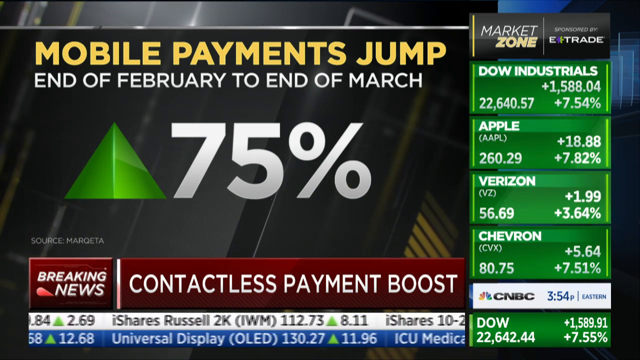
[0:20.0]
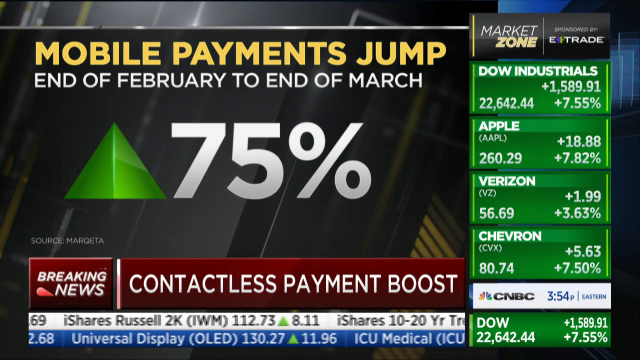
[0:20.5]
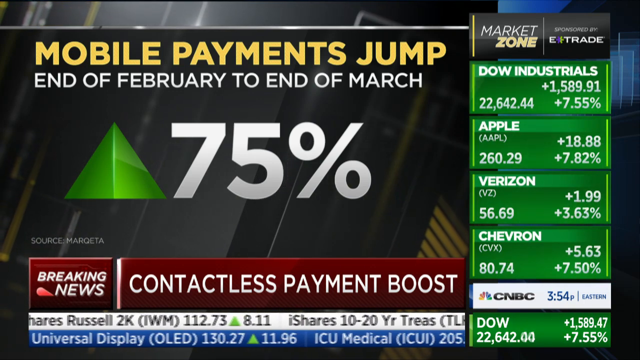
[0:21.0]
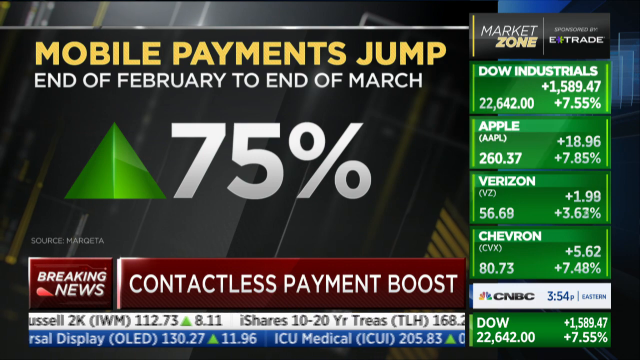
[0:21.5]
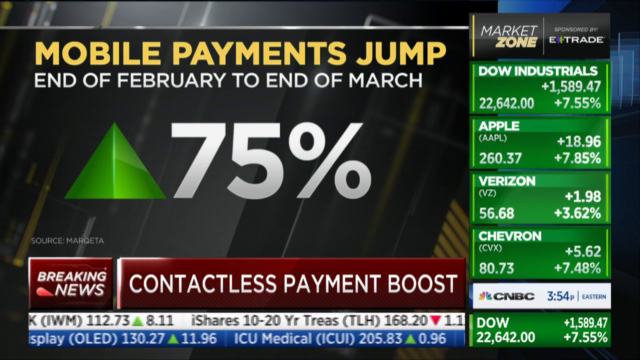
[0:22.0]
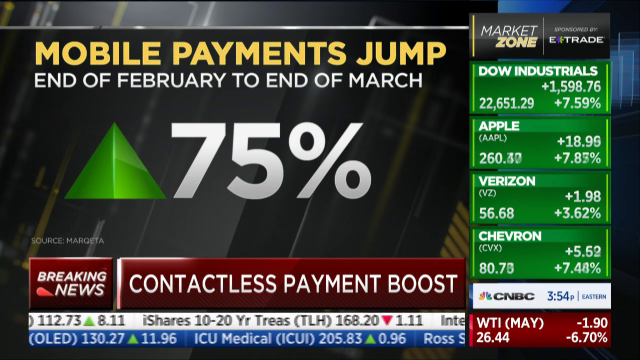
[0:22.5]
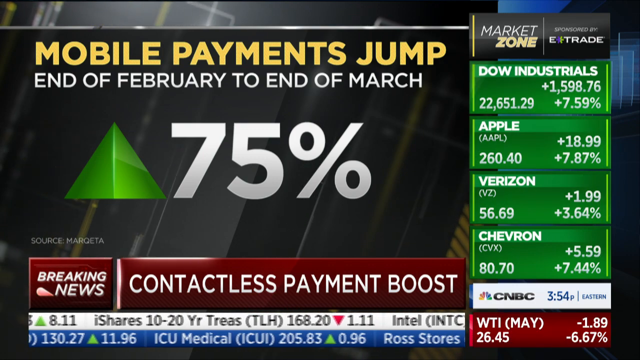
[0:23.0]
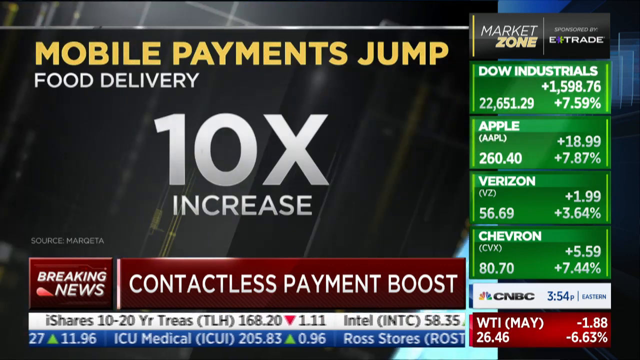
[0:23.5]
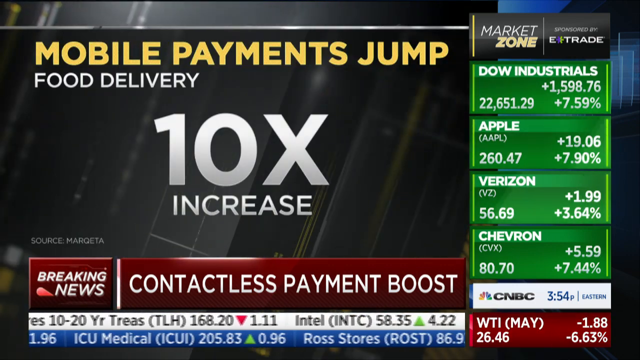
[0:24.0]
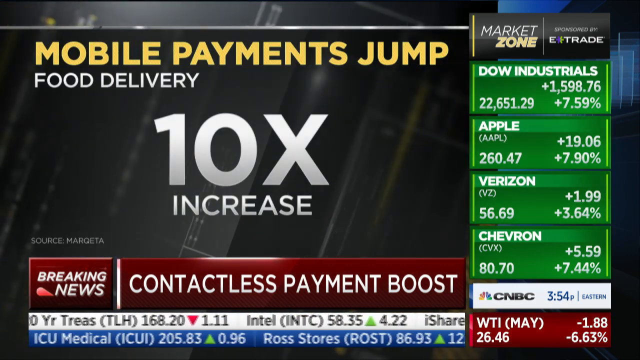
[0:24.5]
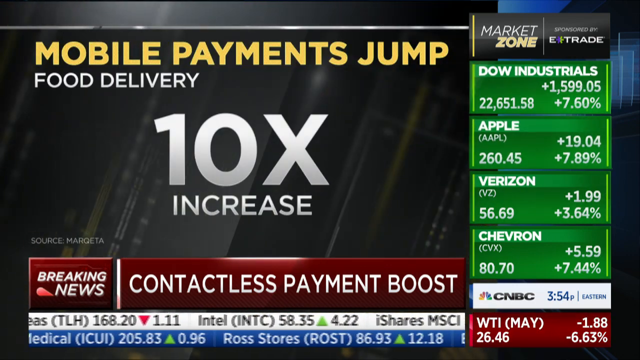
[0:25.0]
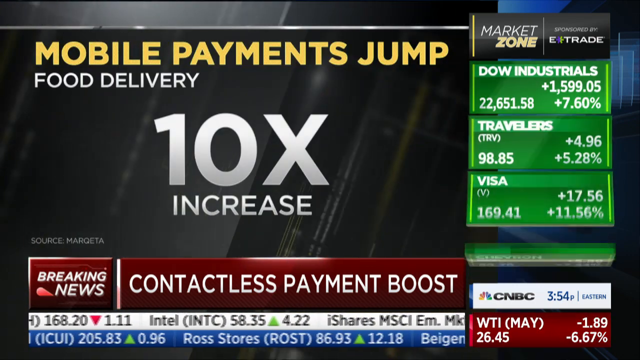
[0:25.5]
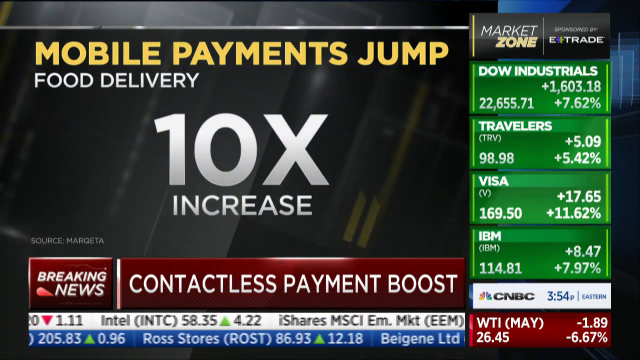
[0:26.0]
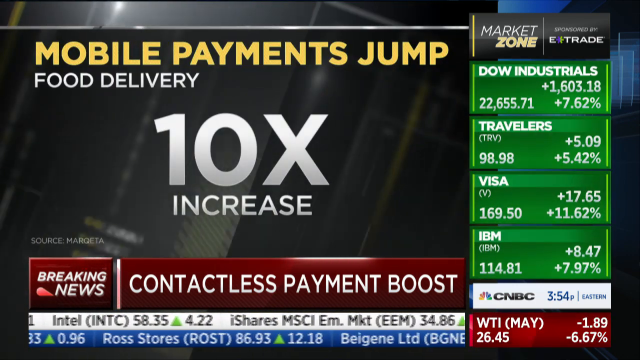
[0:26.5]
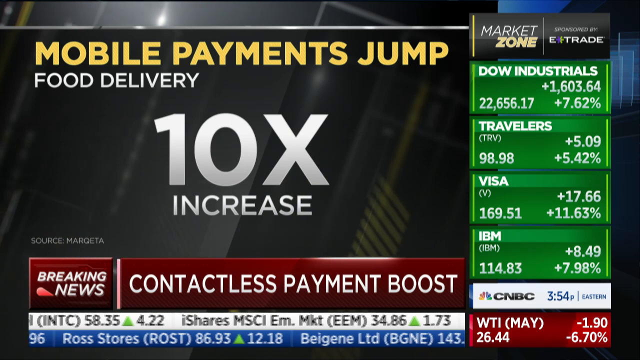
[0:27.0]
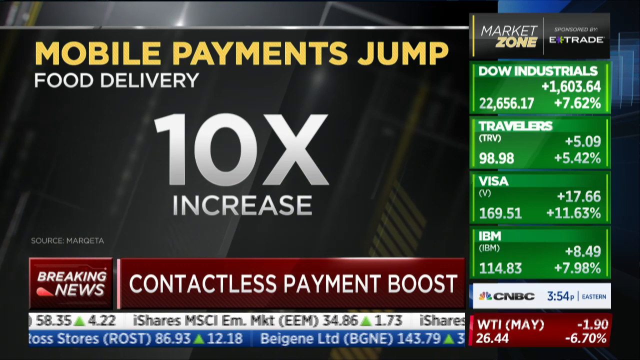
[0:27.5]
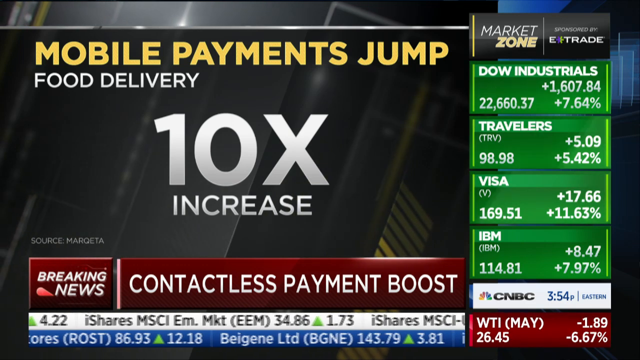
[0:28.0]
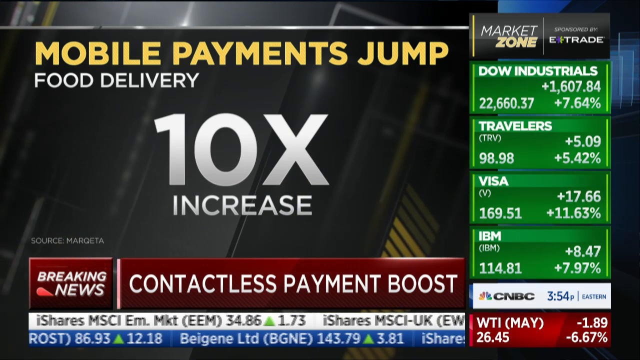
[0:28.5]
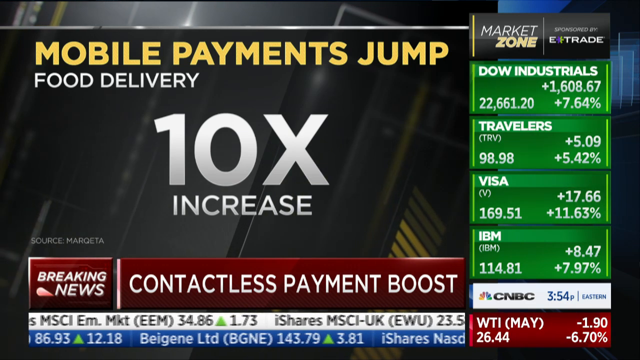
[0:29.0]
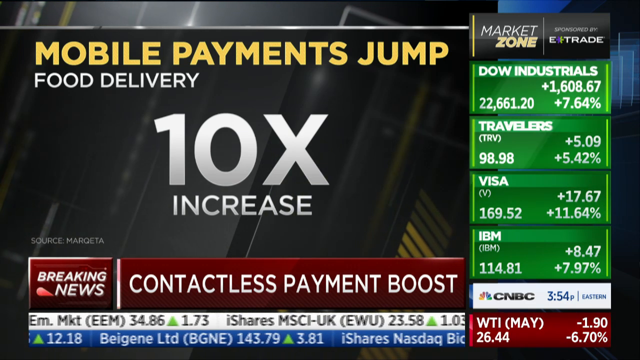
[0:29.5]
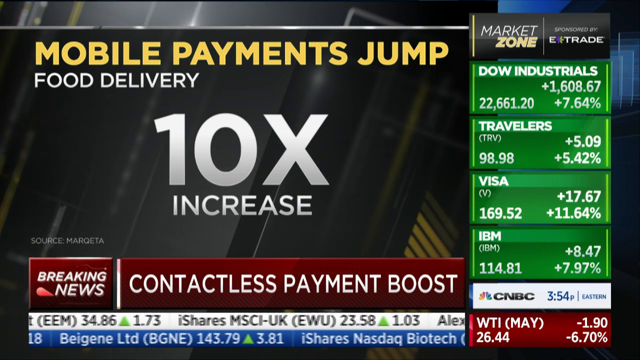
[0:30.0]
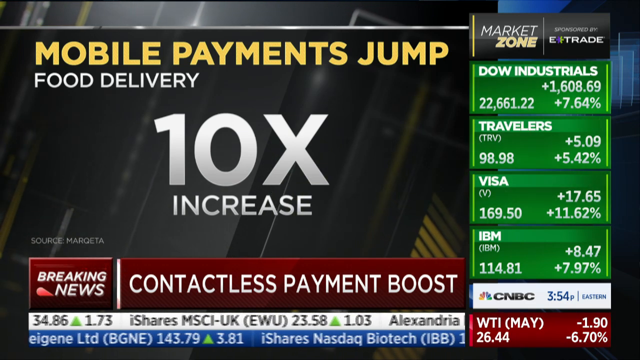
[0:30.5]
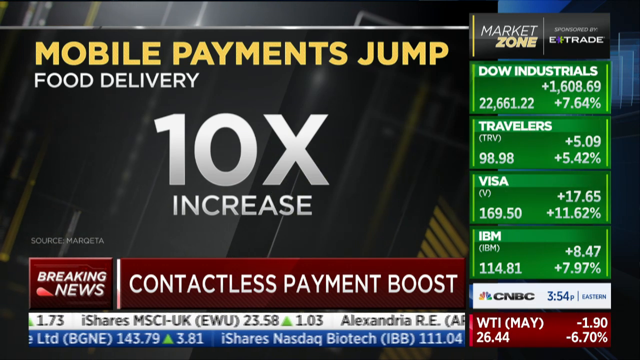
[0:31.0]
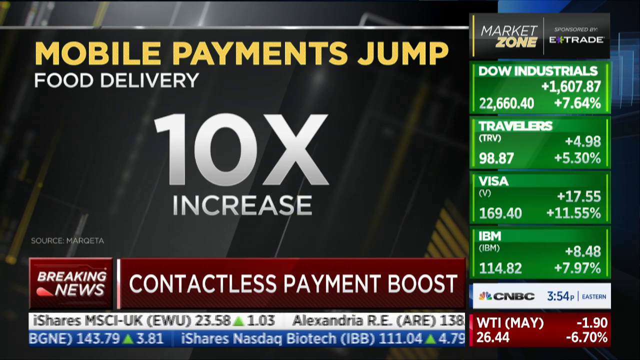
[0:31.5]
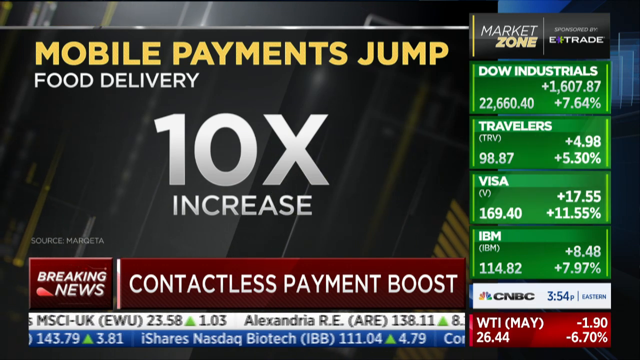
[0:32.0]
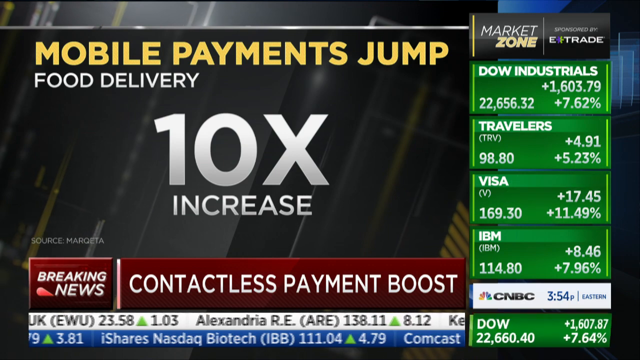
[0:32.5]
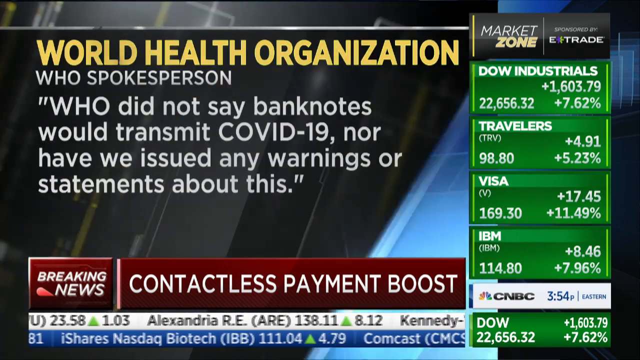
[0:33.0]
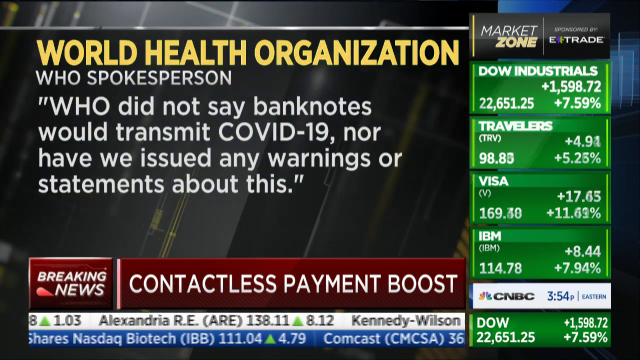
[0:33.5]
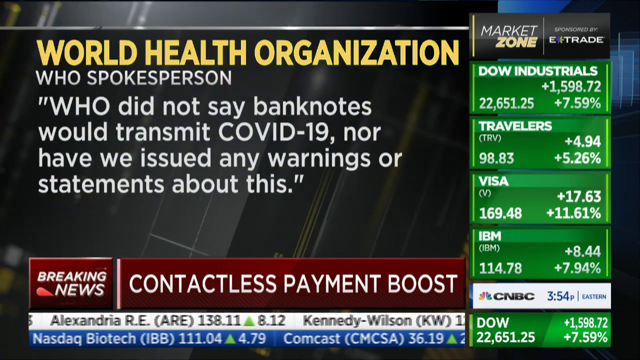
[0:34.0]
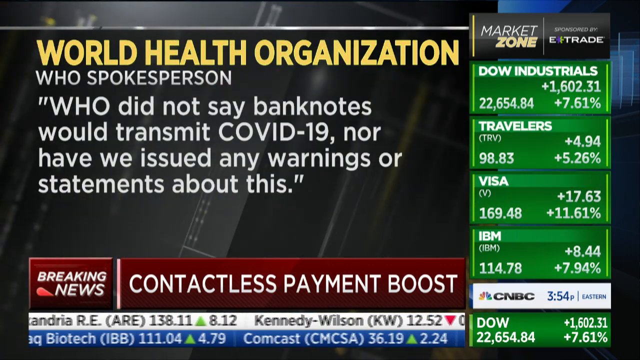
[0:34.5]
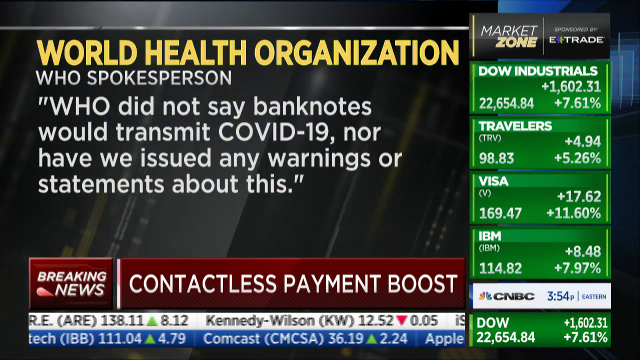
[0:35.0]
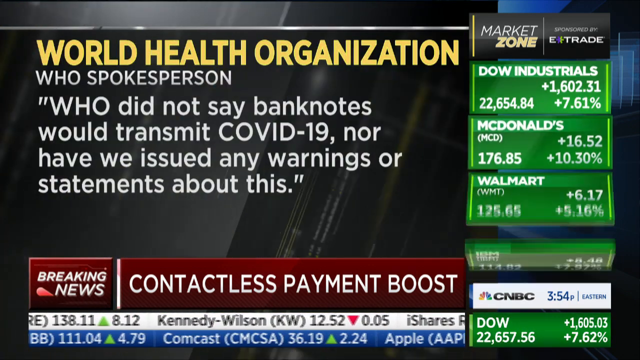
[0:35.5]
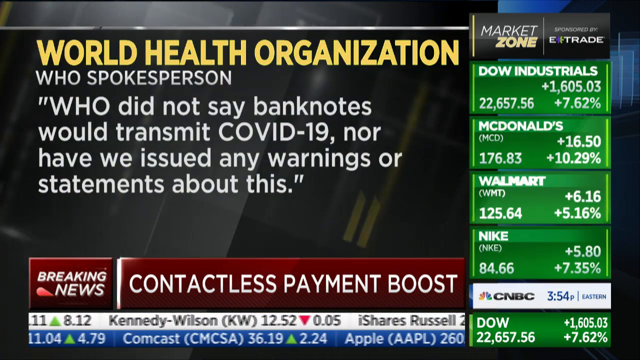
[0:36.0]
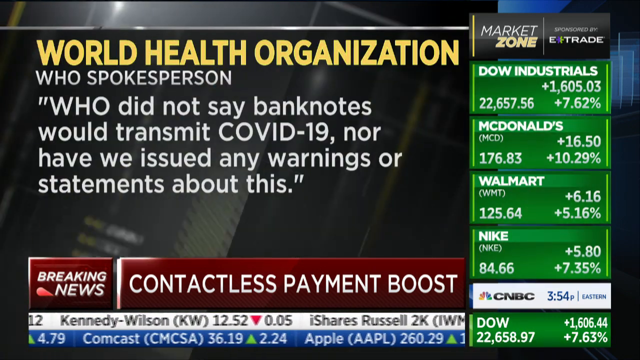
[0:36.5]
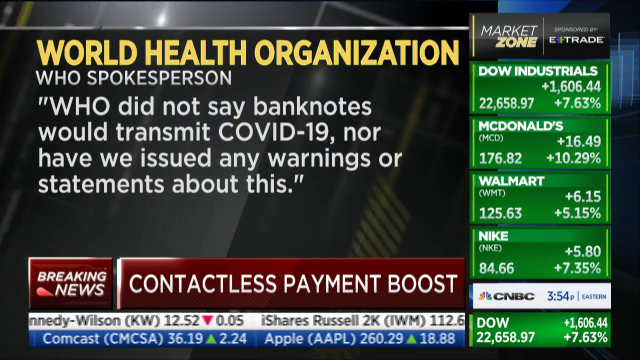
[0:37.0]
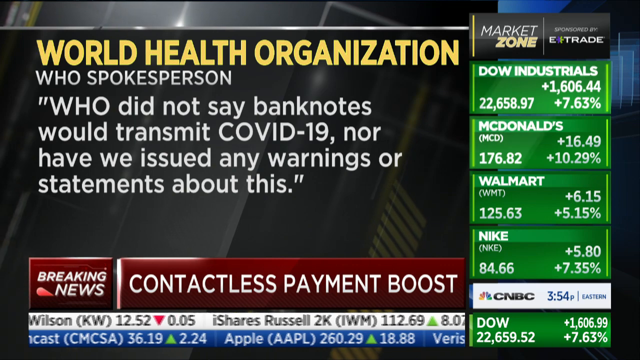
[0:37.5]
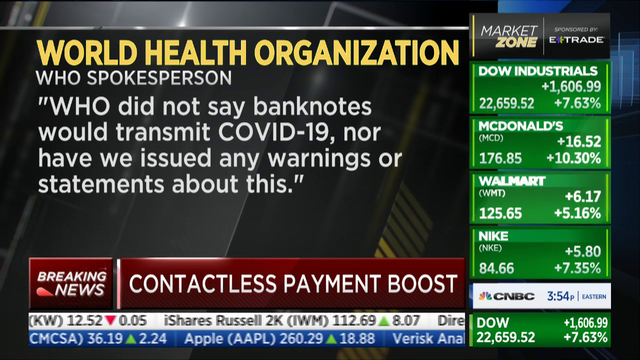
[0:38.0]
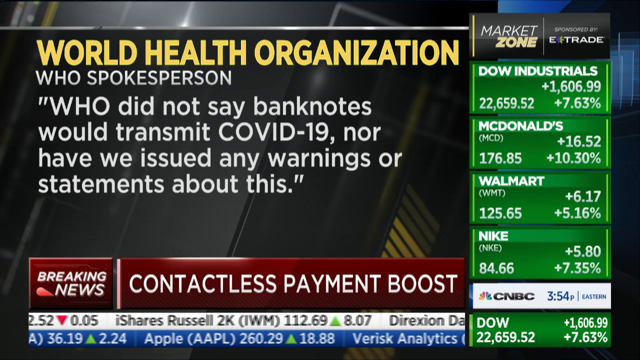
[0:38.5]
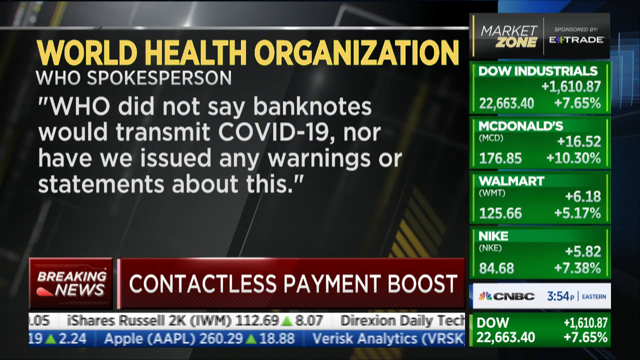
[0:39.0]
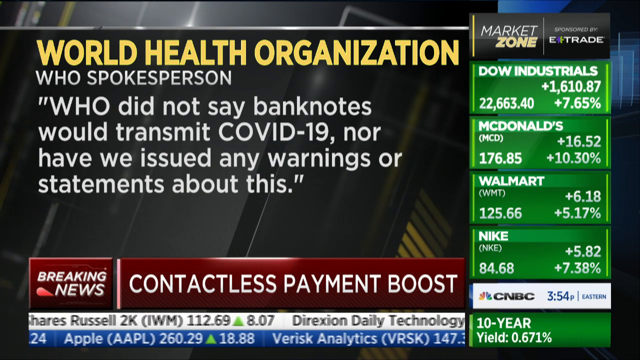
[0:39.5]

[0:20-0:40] Market news appears on the screen. On the right-hand side is a vertical green strip with market news; it reads "market zone" and shows how the Dow, Apple stock, Verizon, Chevron and CNBC have performed over a 24-hour period. In the middle of the screen is a green triangle pointing up and "75%" written in white, indicating that mobile payments jumped 75% from the end of February to the end of March. The scene then changes, and in the middle are the words "10x increase" with the words "food delivery" above them, indicating a tenfold increase in food delivery services. It quickly changes again to show the words "World Health Organization", with "WHO spokesperson" underneath them, and the quote "WHO did not say banknotes would transmit COVID-19, nor have we issued any warnings or statements about this."